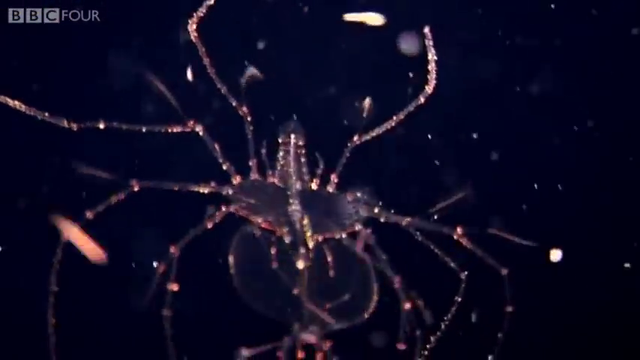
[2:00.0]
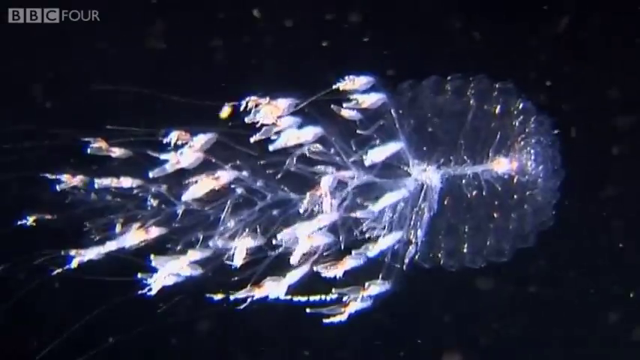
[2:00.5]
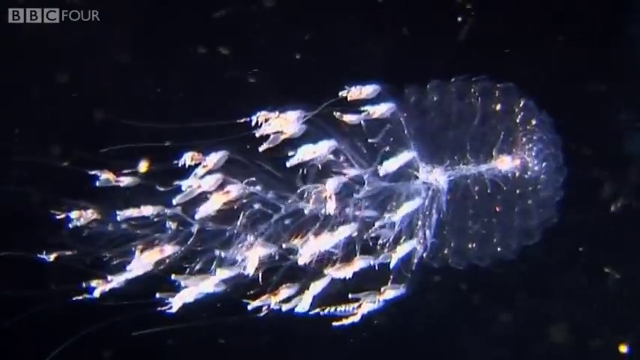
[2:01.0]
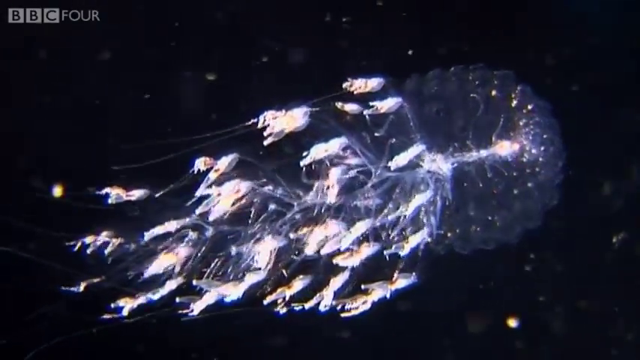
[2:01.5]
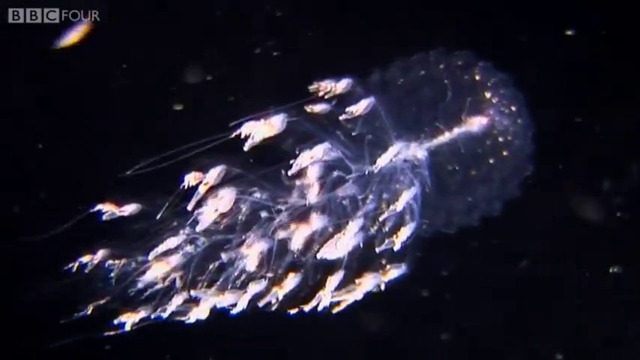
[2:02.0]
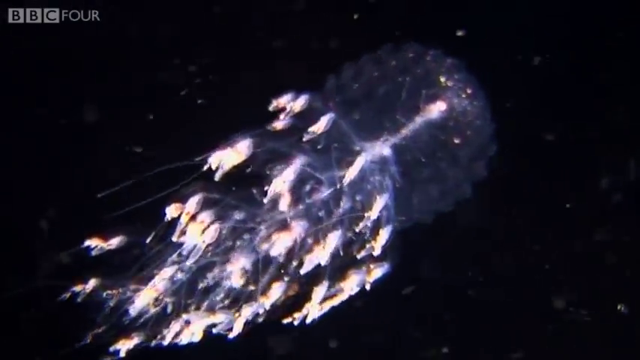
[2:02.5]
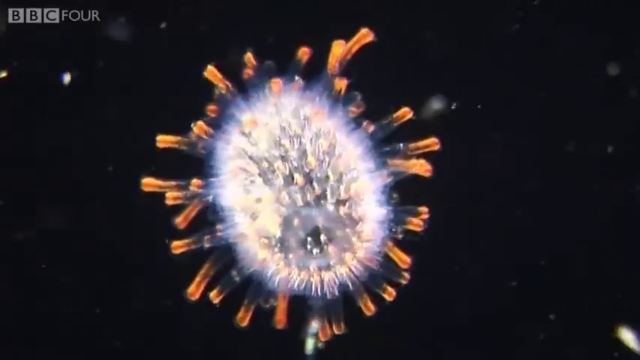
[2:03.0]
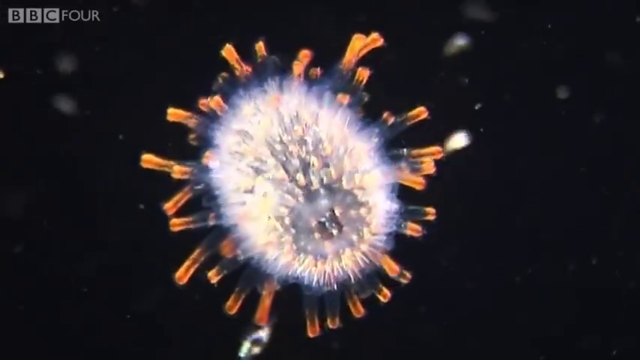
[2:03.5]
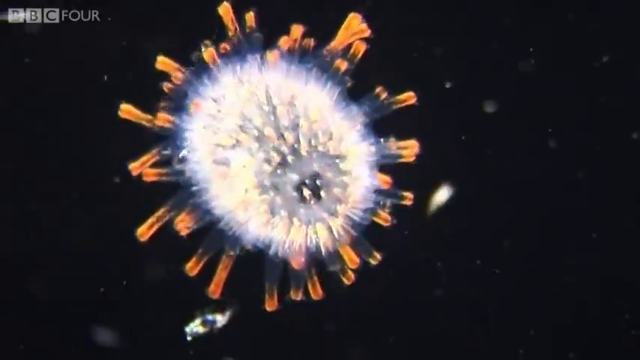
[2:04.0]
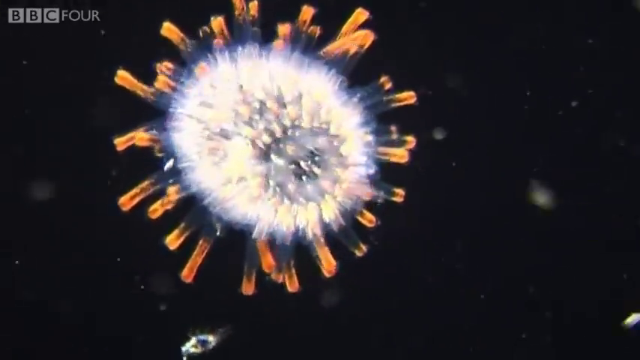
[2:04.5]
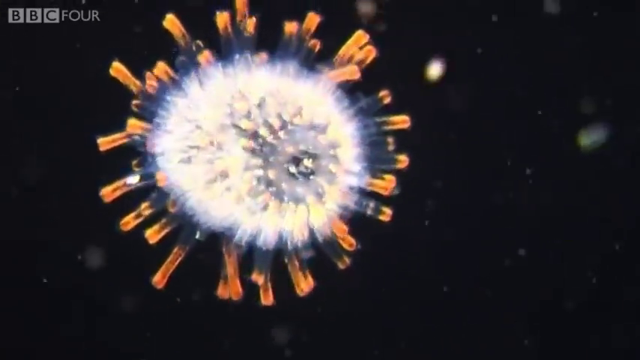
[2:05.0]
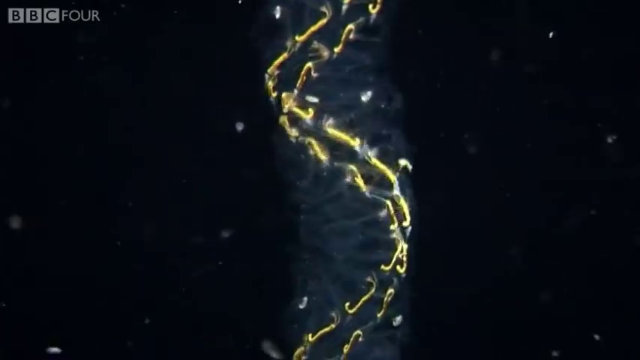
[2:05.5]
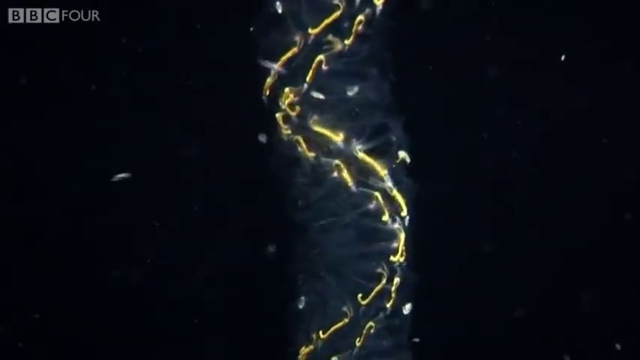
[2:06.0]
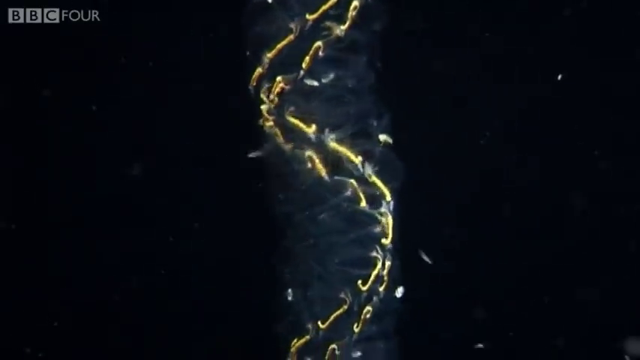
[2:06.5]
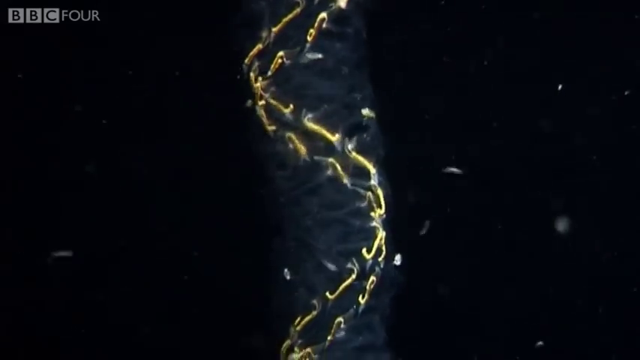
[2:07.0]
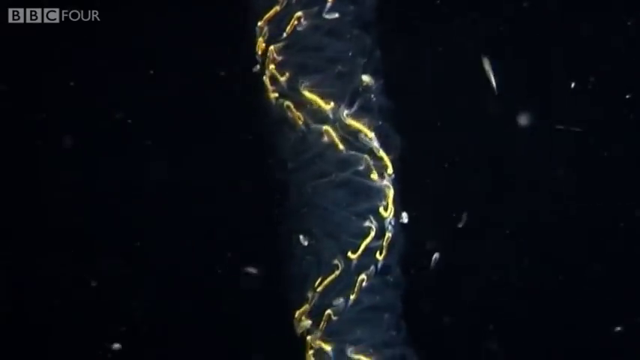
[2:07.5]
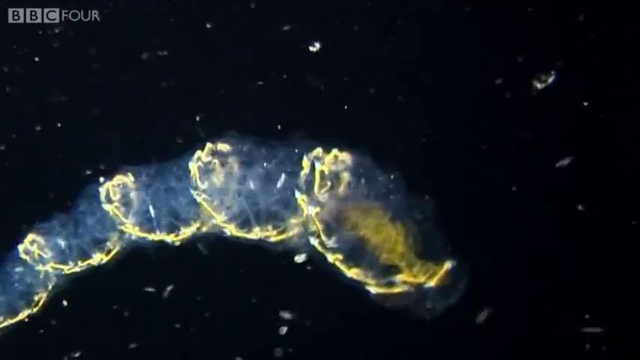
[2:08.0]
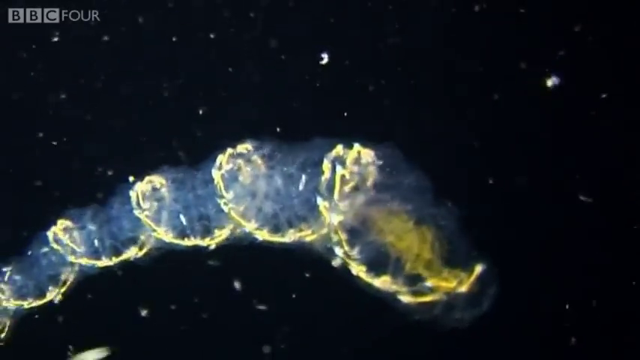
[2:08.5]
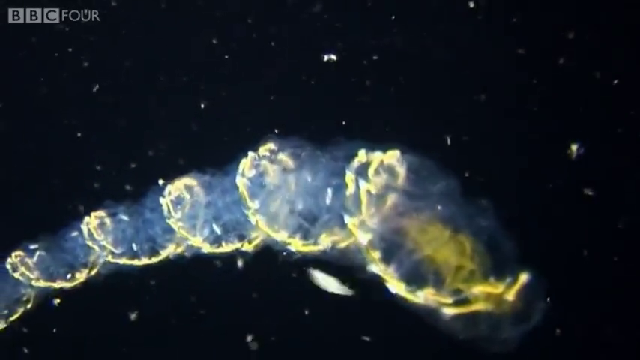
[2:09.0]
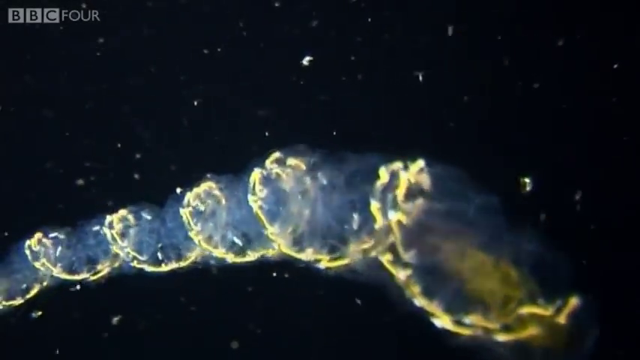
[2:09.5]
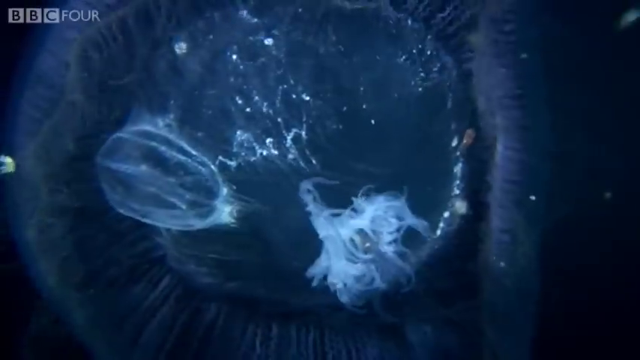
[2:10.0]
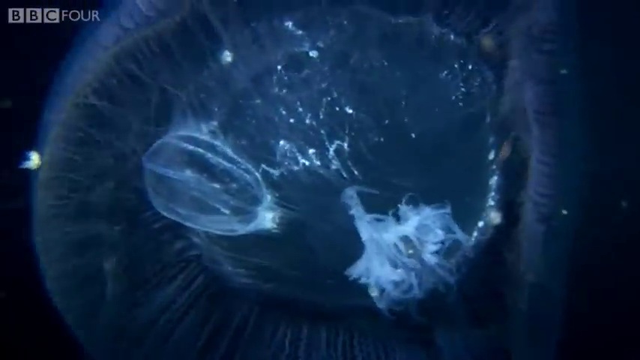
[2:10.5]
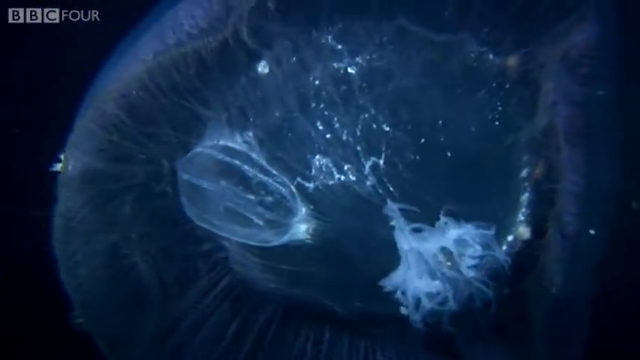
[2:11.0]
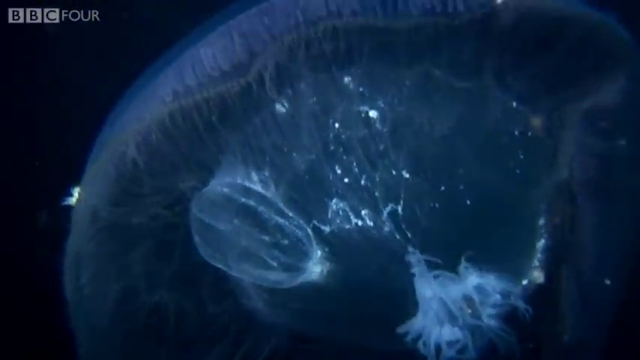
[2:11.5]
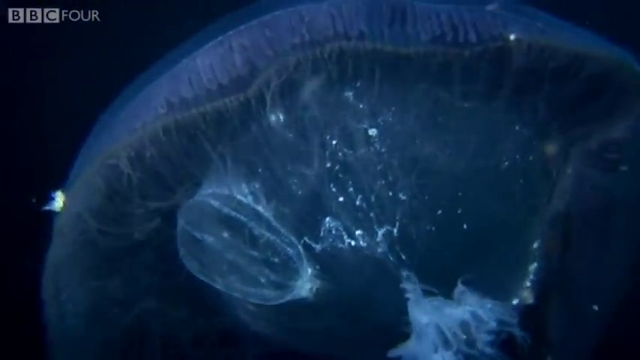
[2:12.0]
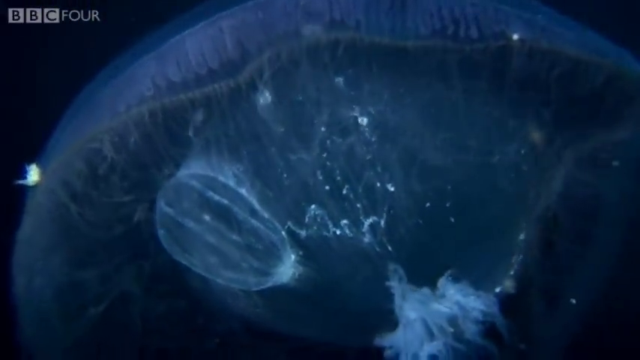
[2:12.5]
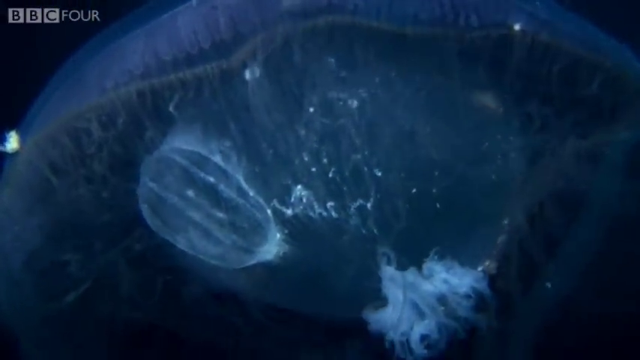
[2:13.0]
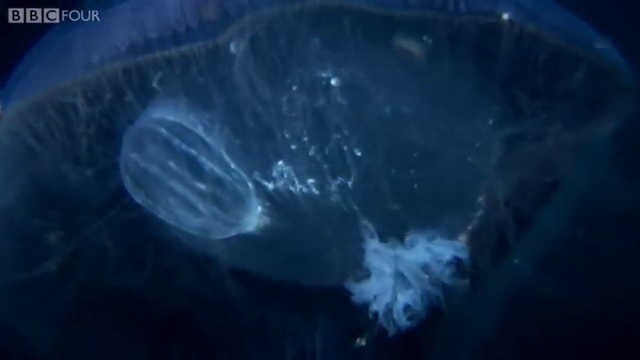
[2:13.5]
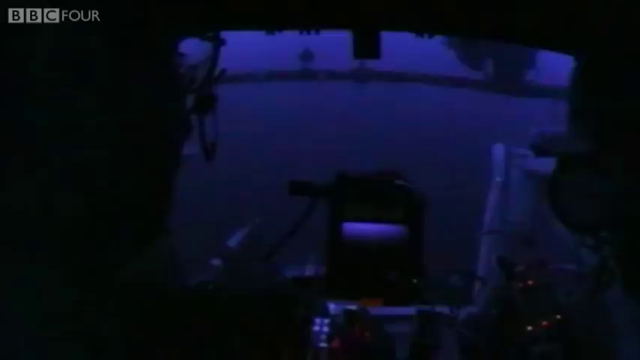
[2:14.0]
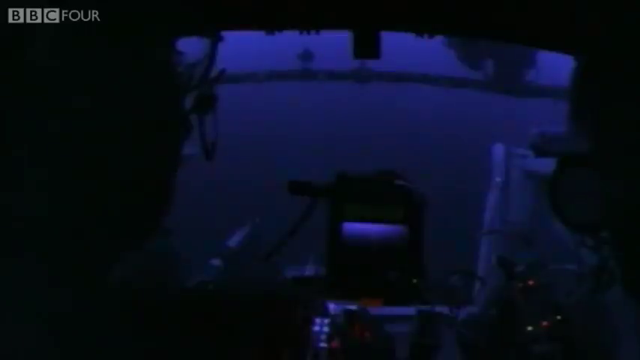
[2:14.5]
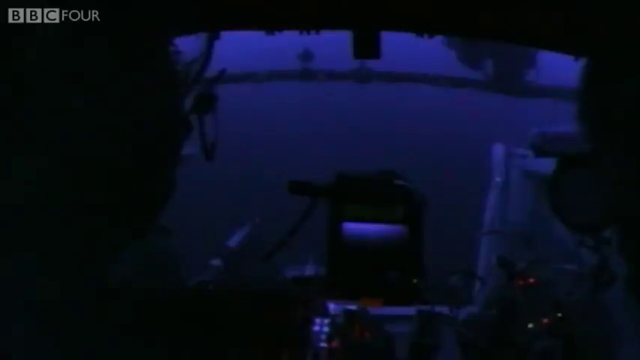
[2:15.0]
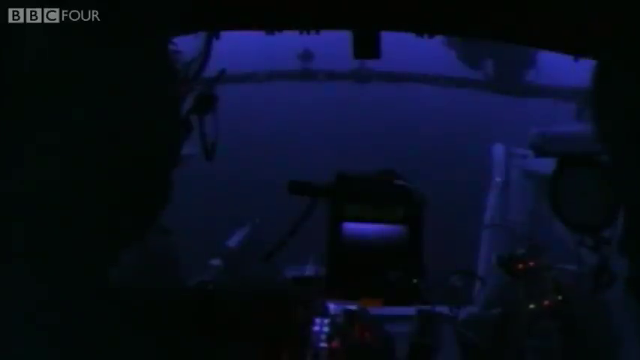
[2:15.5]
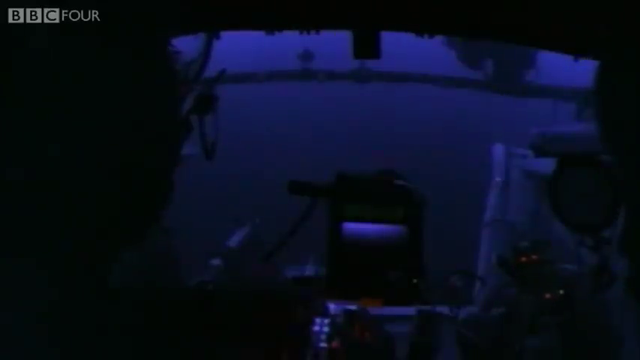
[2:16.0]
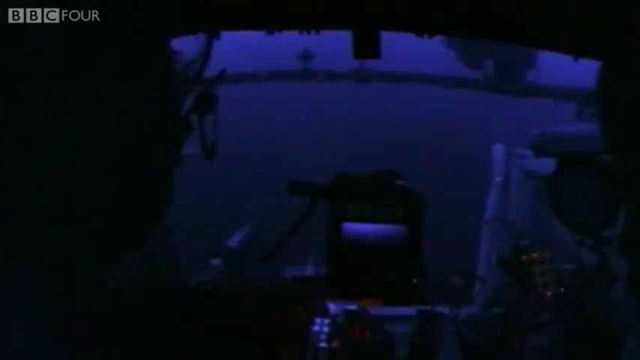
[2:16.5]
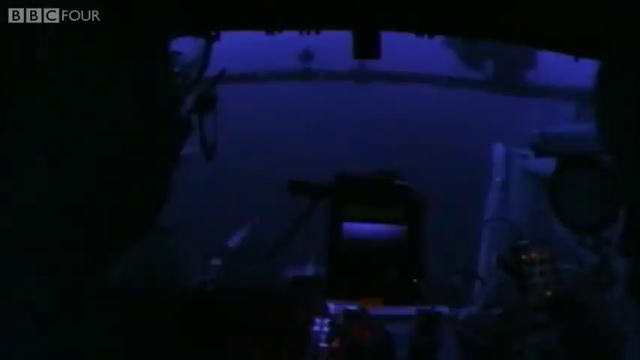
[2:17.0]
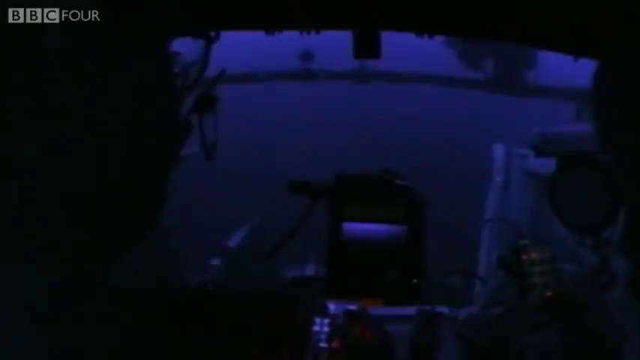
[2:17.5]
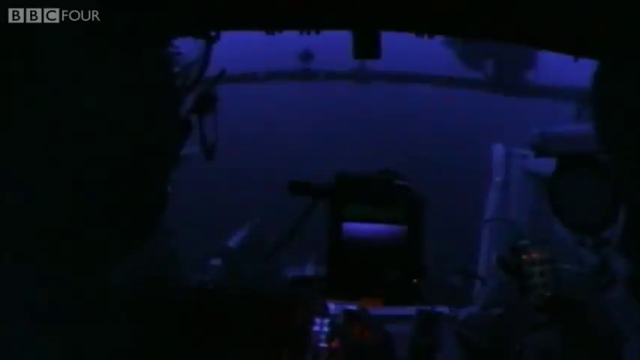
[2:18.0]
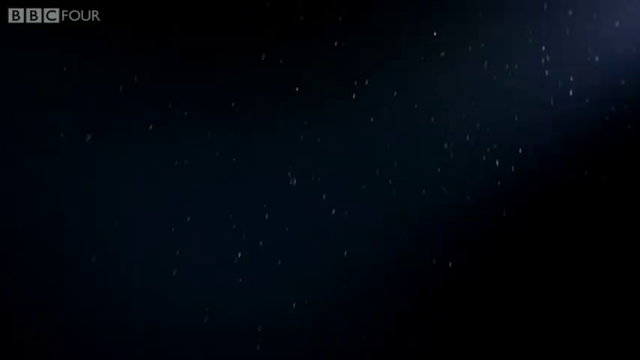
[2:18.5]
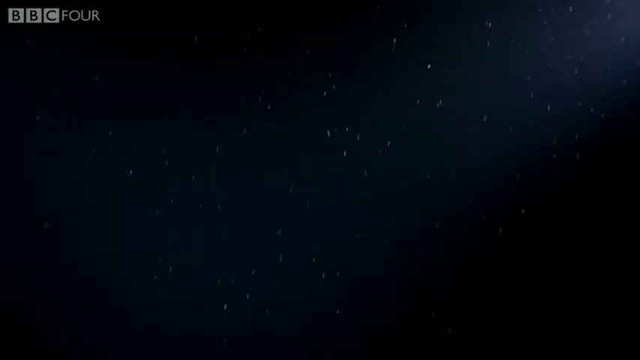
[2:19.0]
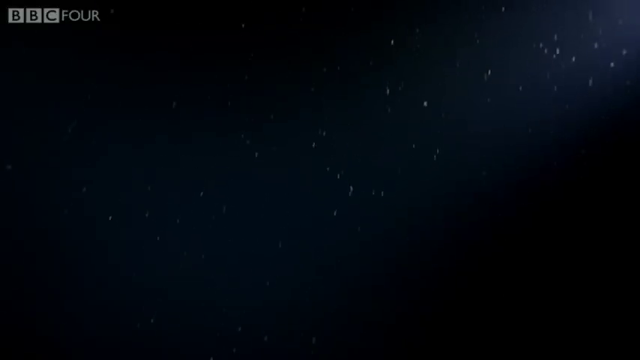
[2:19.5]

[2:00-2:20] Various deep-sea creatures appear against a black background; they look small, though their size is hard to tell. One is a clear-bodied, see-through creature with bioluminescence in its tentacles; dozens of tentacles hang out the back of its body, and it seems to use the ocean current to move around. Another looks like a white fluffy ball with orange tentacles coming out of all sides of its body; the tentacles are not really moving, and it seems to be floating on the current. Next is a long, cylinder-type creature whose yellow body curls around like a rope; it is clear and see-through except for the yellow cord structure of the body, which is yellow bioluminescence.